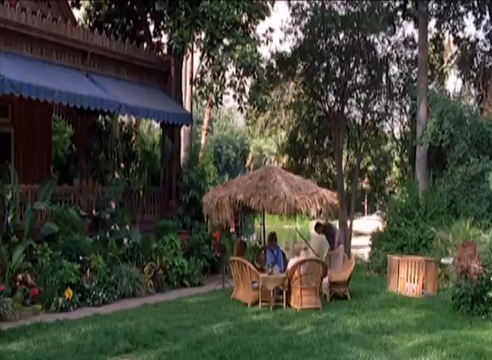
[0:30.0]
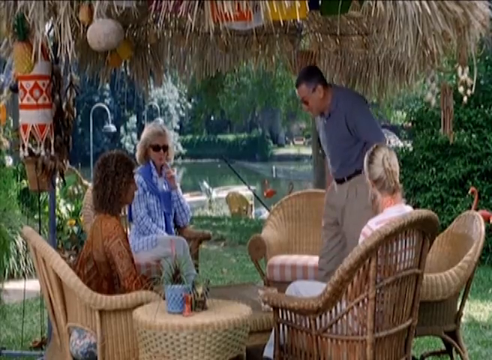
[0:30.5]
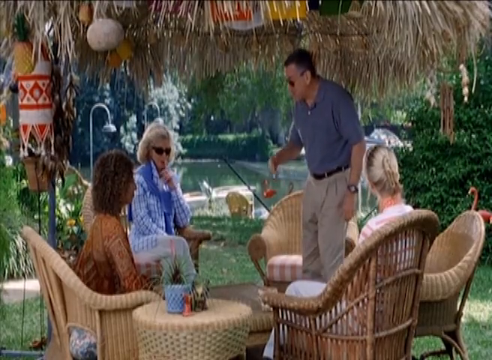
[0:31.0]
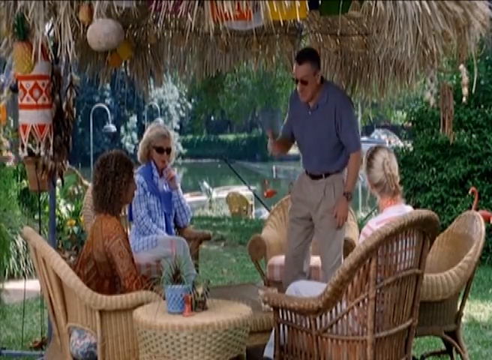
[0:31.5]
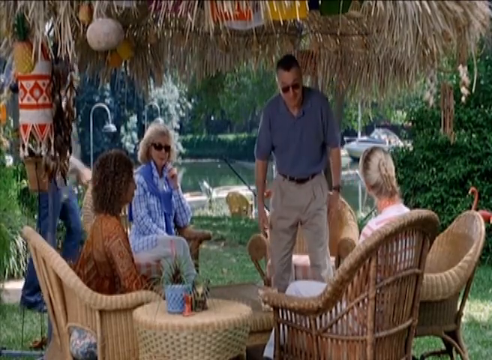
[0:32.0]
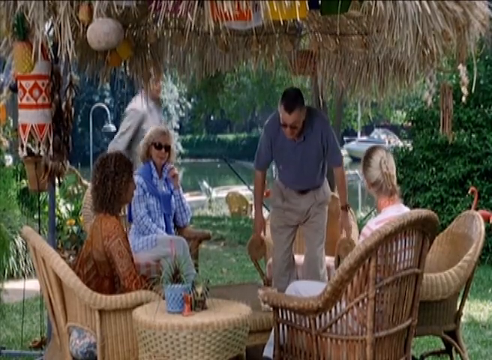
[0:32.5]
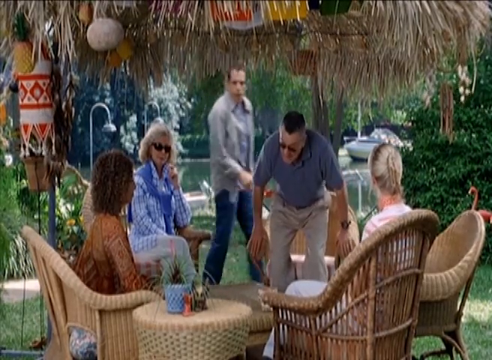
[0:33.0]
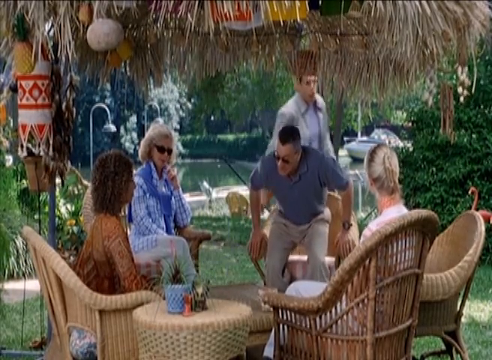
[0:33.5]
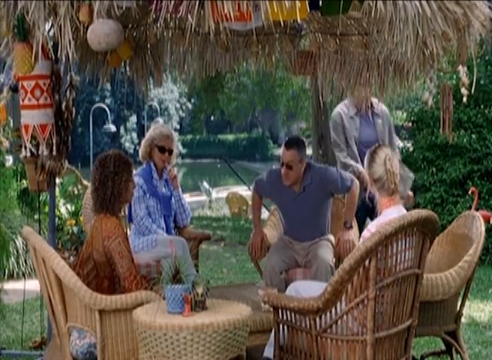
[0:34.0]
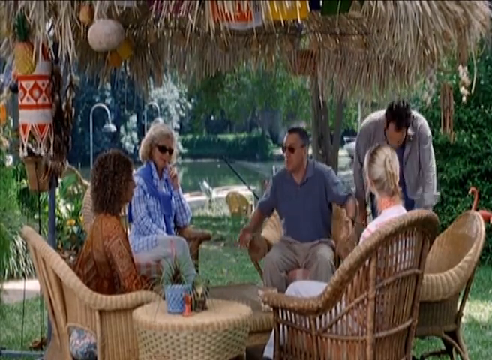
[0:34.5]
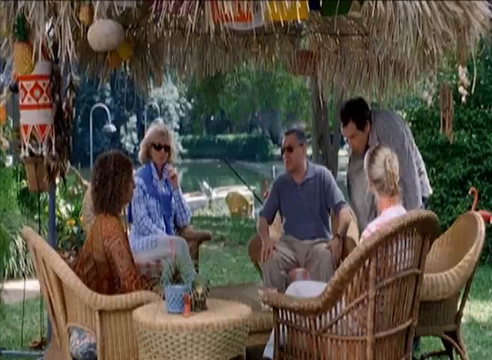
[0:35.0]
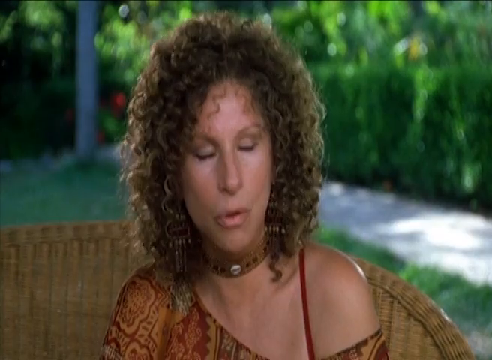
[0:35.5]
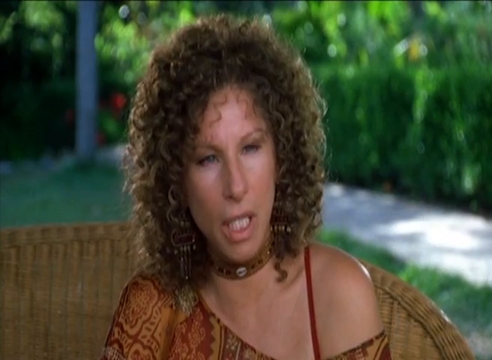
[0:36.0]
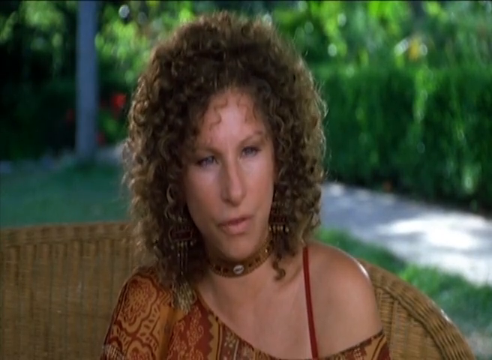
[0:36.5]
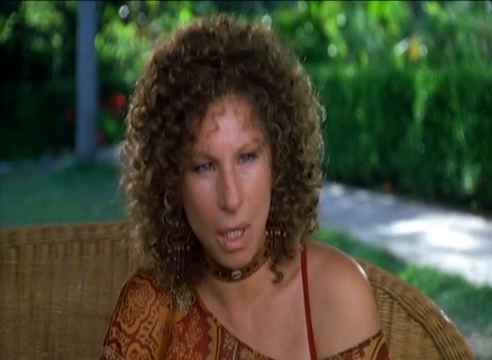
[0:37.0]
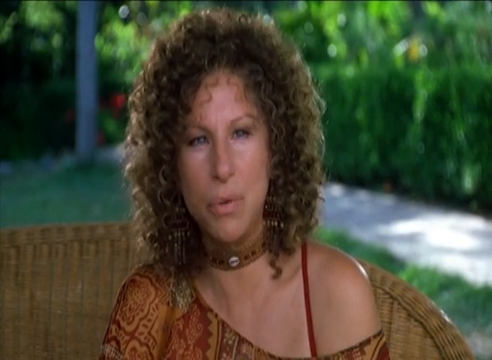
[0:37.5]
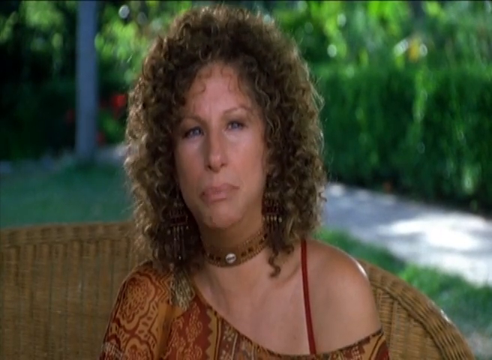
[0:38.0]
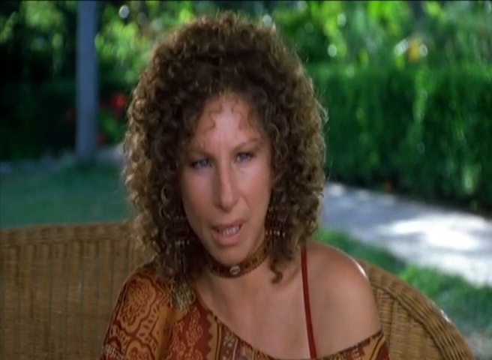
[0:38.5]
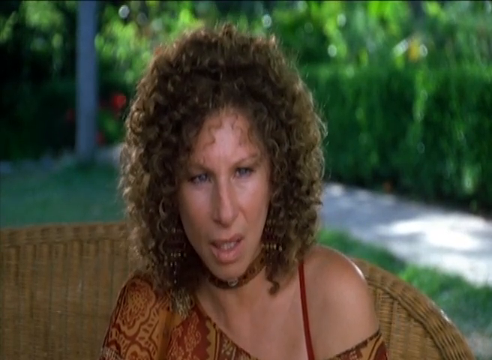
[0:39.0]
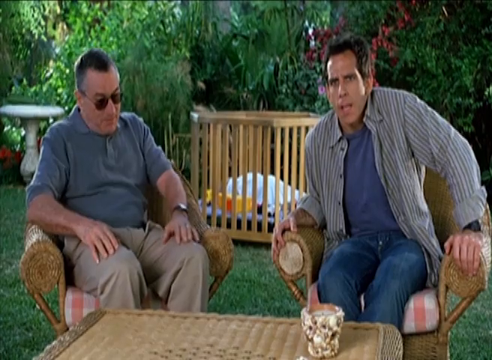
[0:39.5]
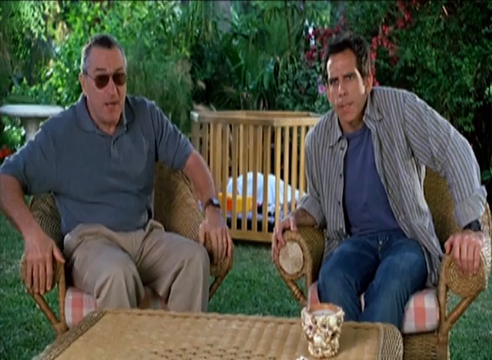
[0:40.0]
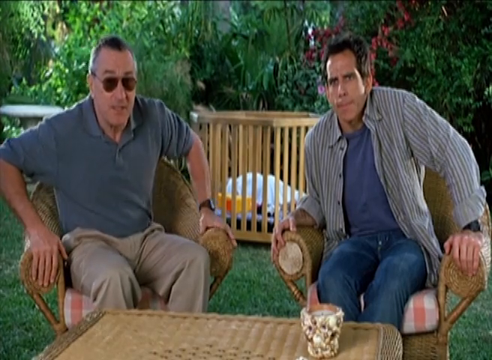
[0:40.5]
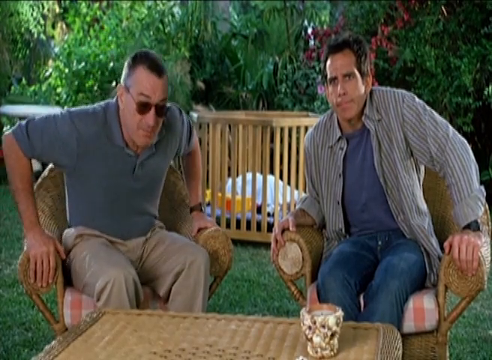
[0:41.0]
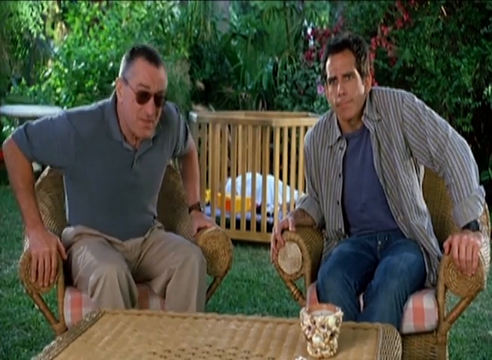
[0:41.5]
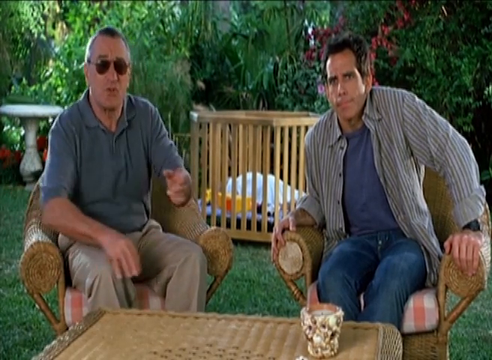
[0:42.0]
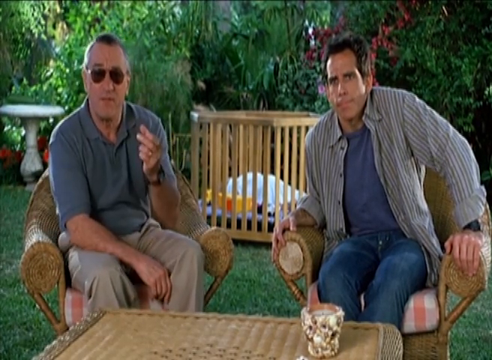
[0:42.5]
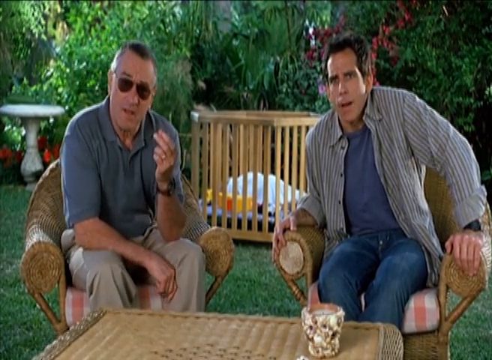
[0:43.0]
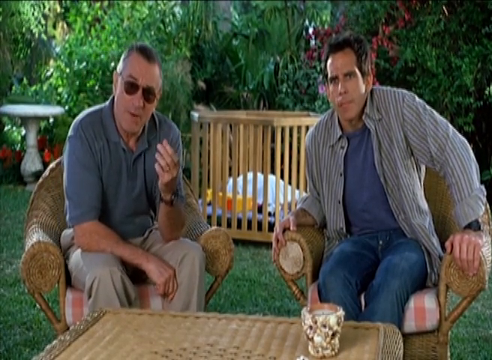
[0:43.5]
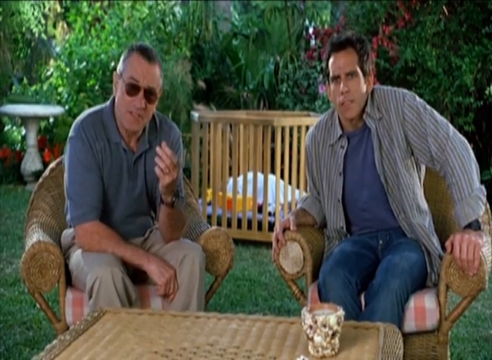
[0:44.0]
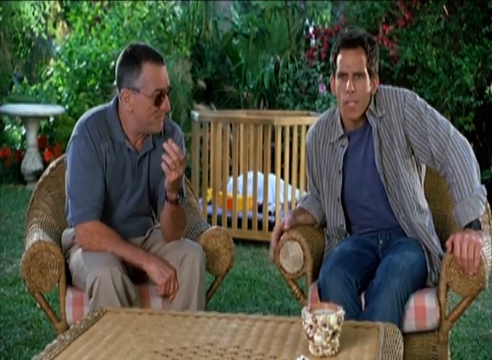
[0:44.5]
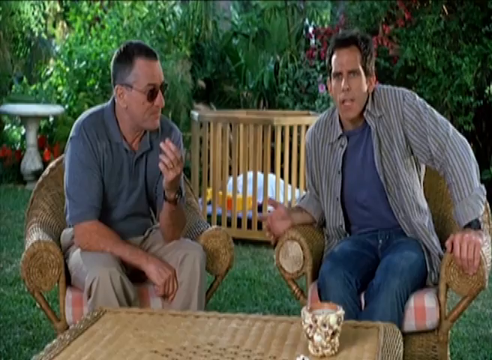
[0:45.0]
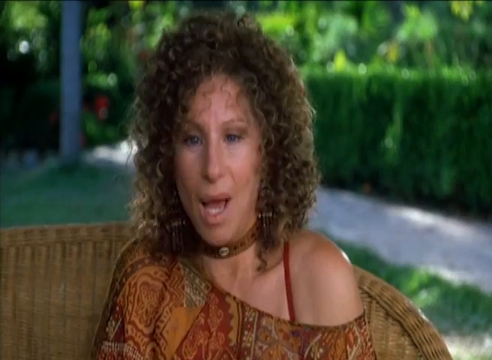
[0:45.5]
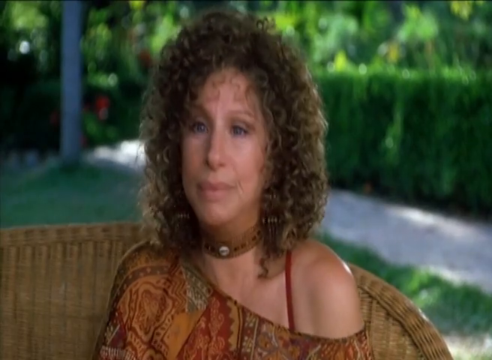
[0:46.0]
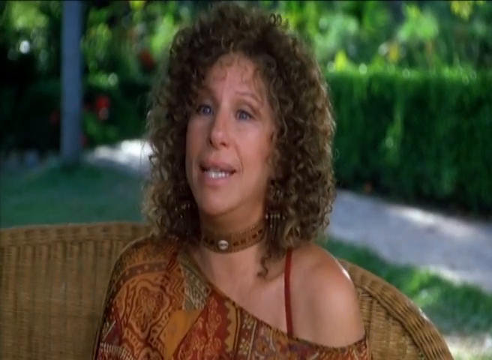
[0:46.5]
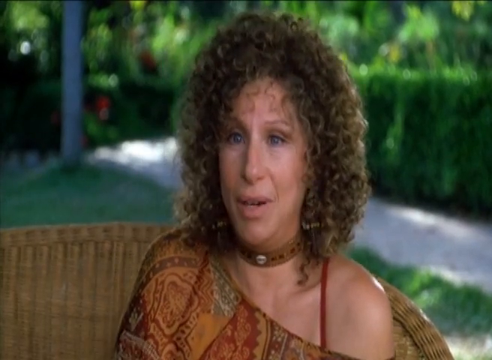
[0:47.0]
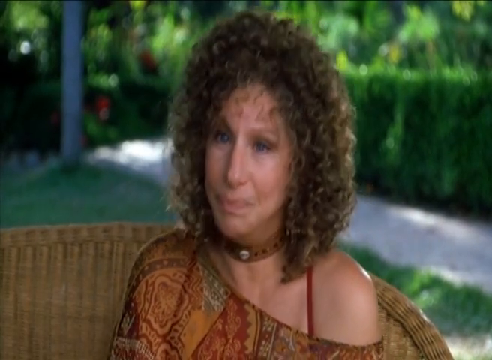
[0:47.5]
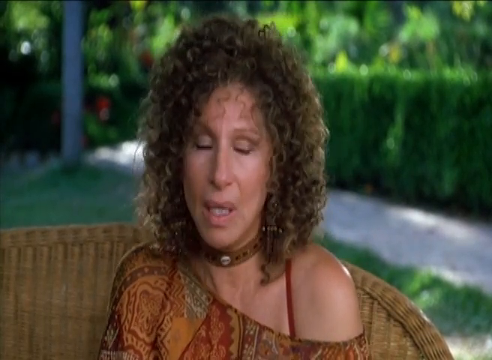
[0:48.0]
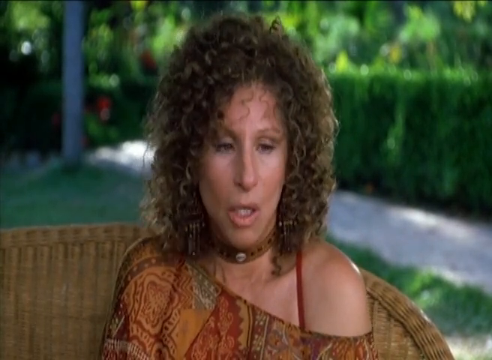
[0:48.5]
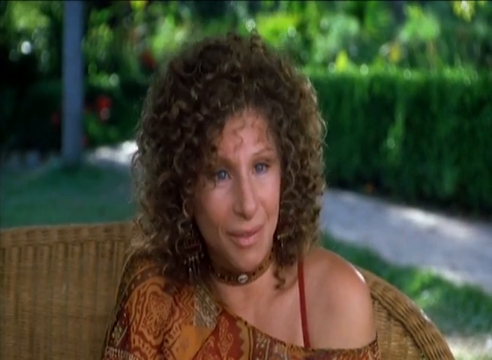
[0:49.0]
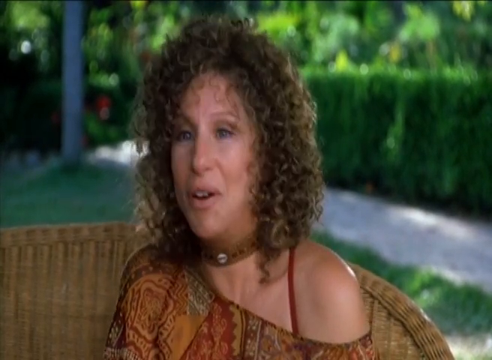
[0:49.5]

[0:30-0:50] A man walks toward three people seated on rattan chairs and sits down. As the scene transitions, it shows three older women seated around a small table, with the fourth person, the older gentleman, sitting down with them. The setting is a backyard with grass all around and trees and bushes everywhere. A fifth person, the younger man, moves in and sits down to join the four older people. The shot moves to one of the older women, a well-dressed woman with brown curls in an off-the-shoulder blouse; she seems to be talking, and her reaction seems pensive and strained. Next, the older gentleman and the younger man sit together, both about to talk. The older gentleman, who wears dark sunglasses, a blue shirt and khaki pants, looks like he wants to get off his chair or is trying to make himself comfortable; he talks and puts his right elbow on his right thigh and his left elbow on his left thigh. Then the young man talks. The shot returns to the older lady with the curls, who talks, smiles gently, and keeps talking for a few seconds.